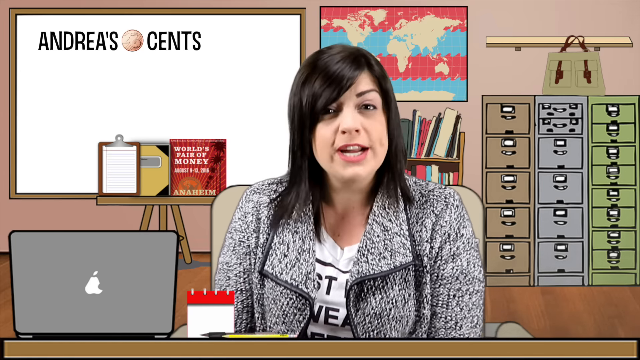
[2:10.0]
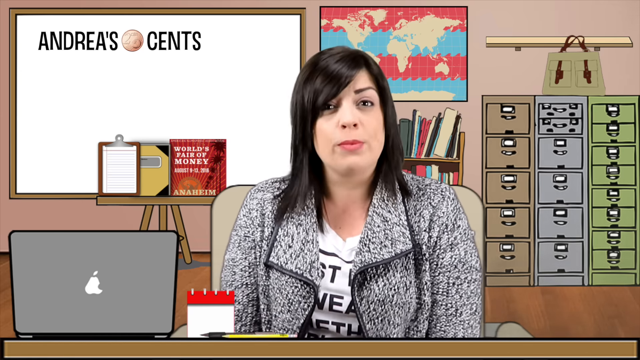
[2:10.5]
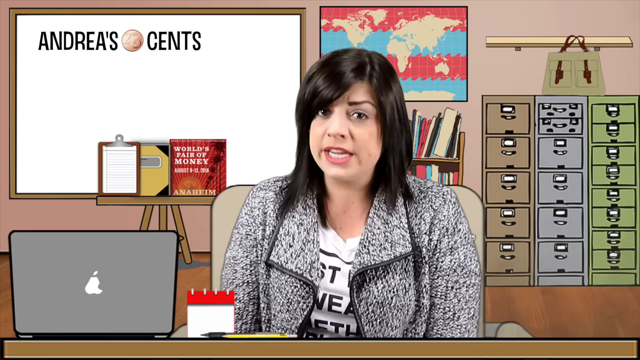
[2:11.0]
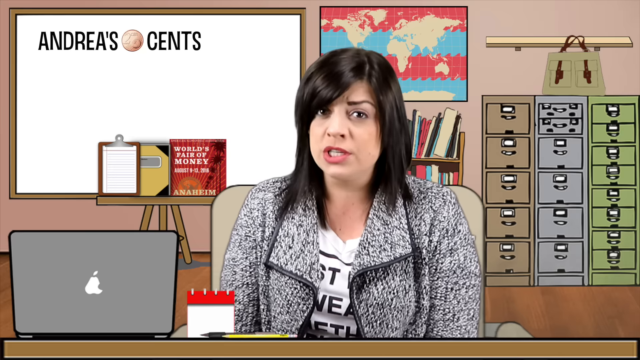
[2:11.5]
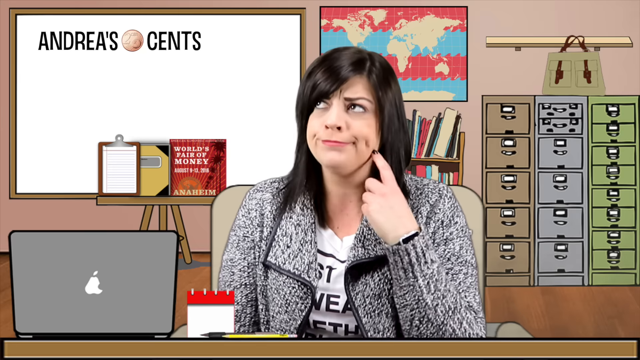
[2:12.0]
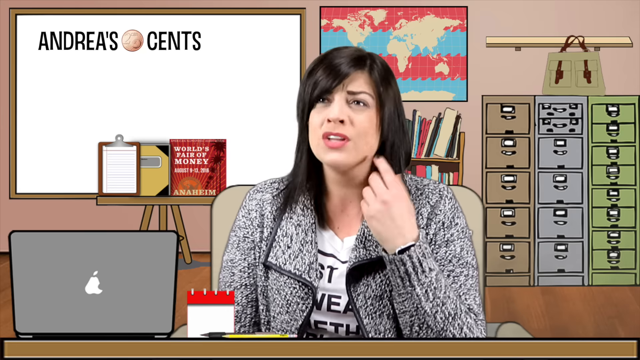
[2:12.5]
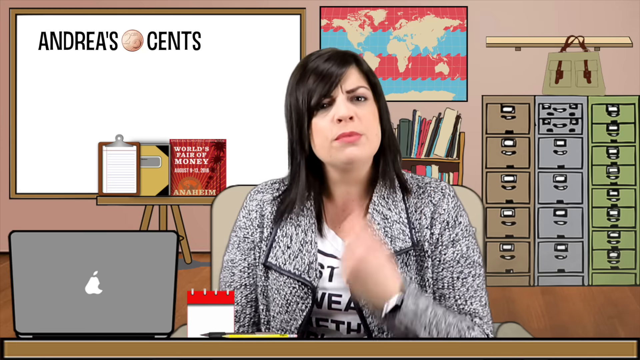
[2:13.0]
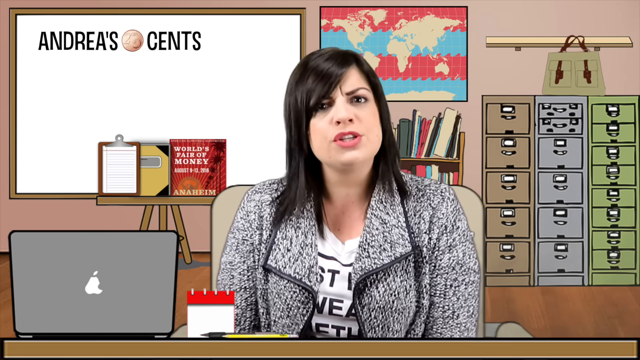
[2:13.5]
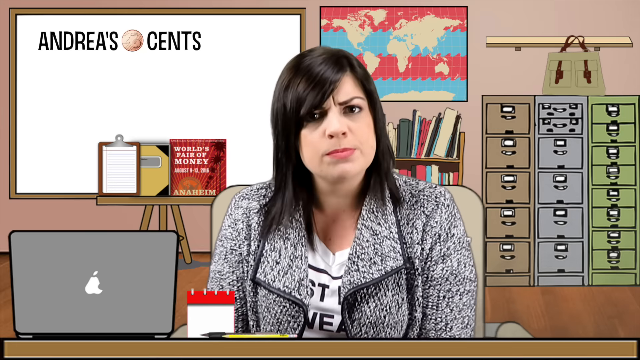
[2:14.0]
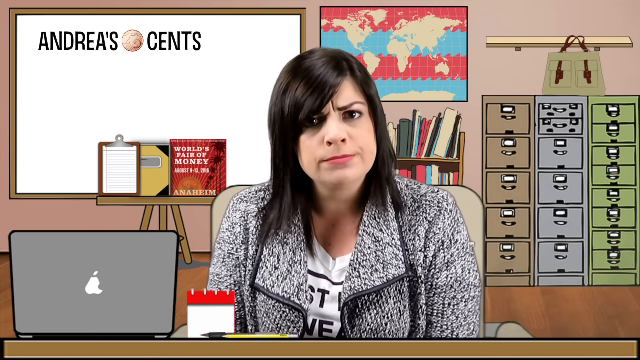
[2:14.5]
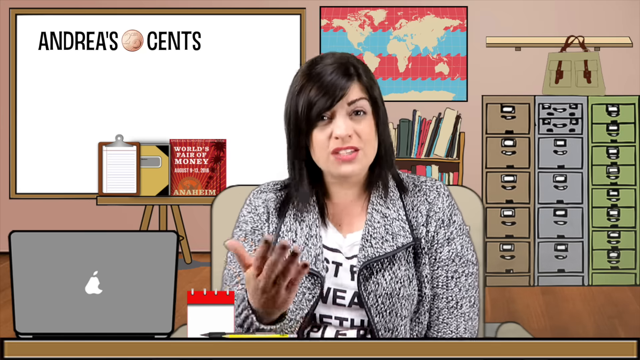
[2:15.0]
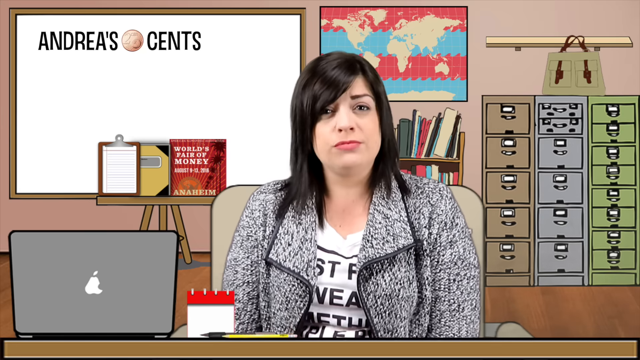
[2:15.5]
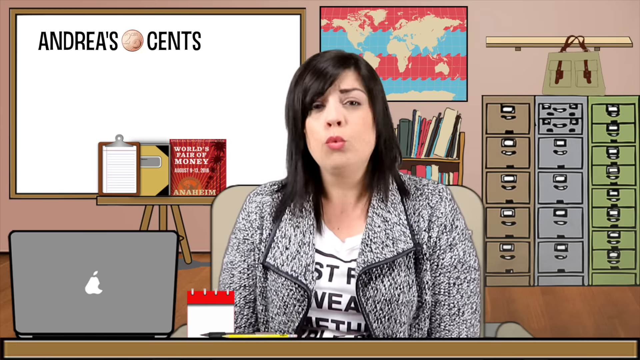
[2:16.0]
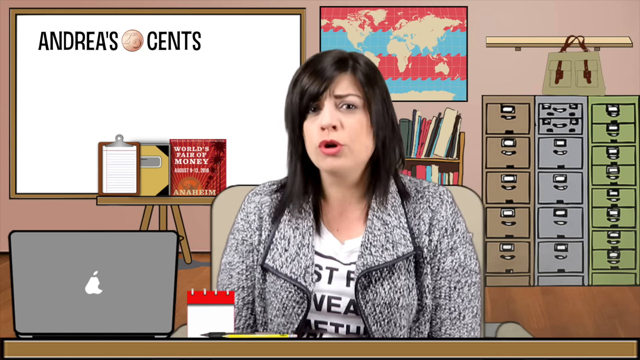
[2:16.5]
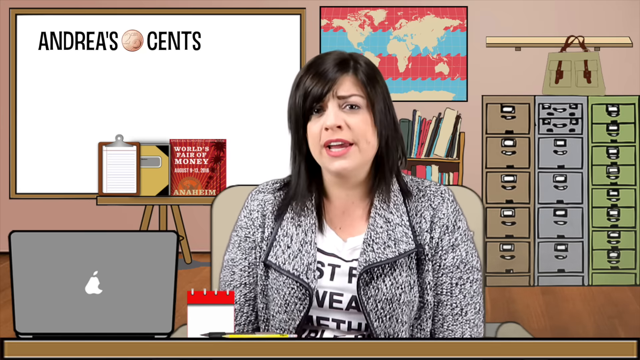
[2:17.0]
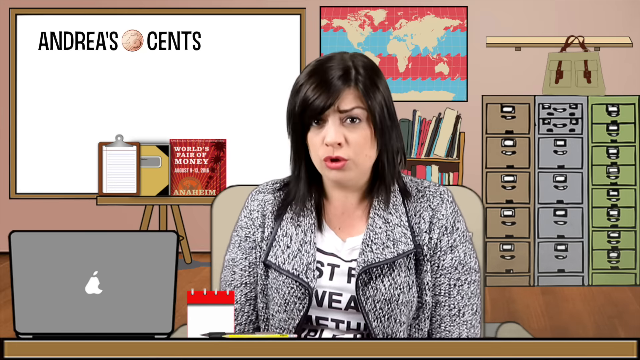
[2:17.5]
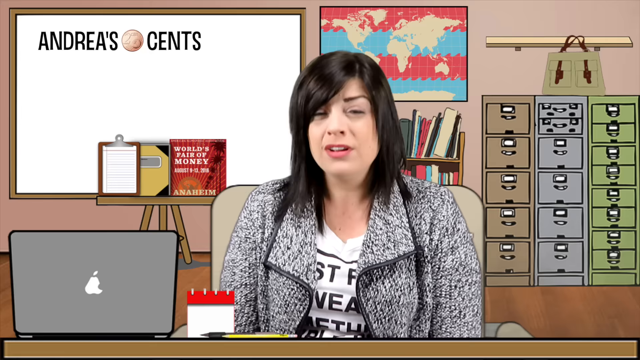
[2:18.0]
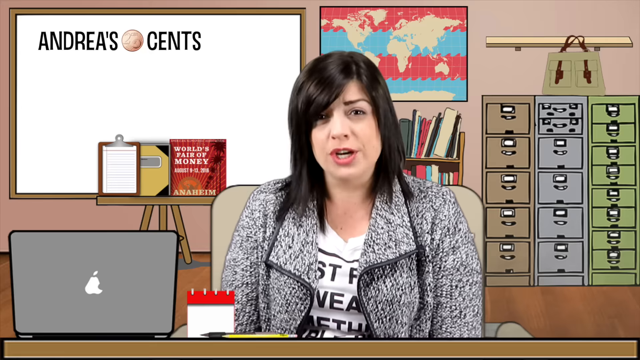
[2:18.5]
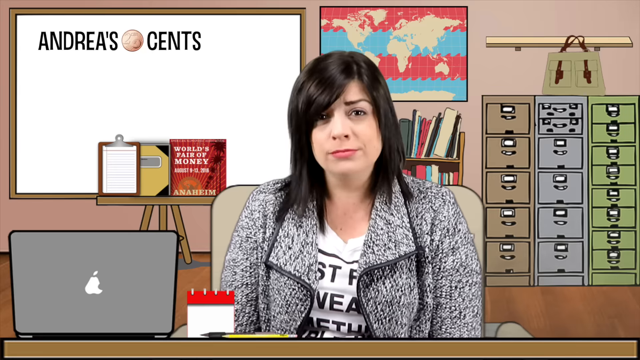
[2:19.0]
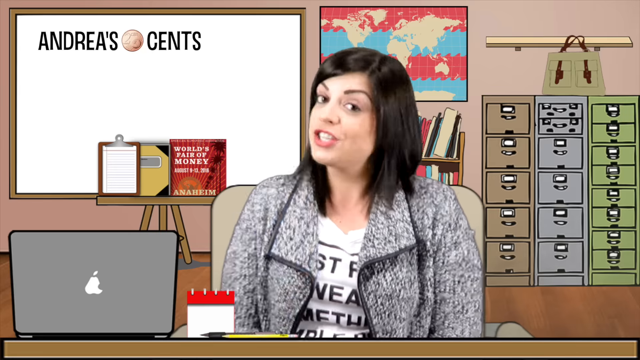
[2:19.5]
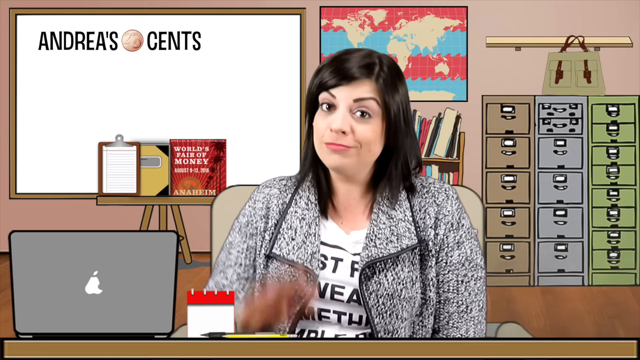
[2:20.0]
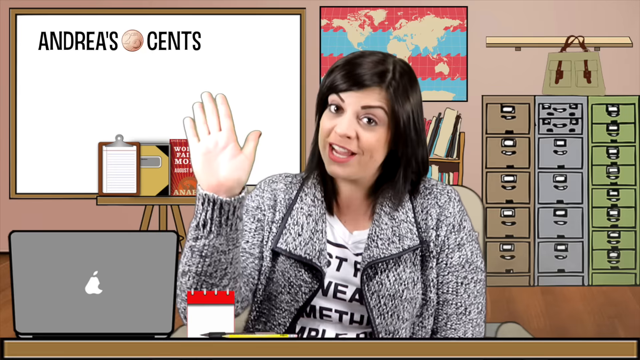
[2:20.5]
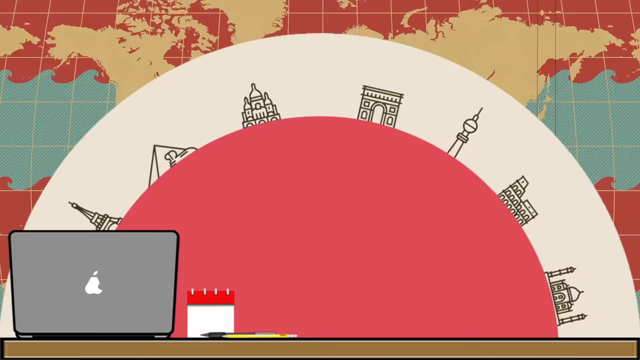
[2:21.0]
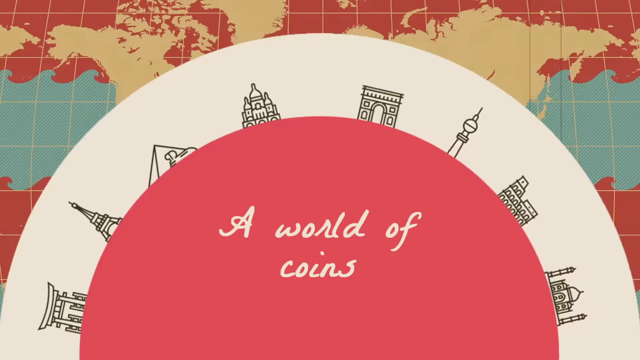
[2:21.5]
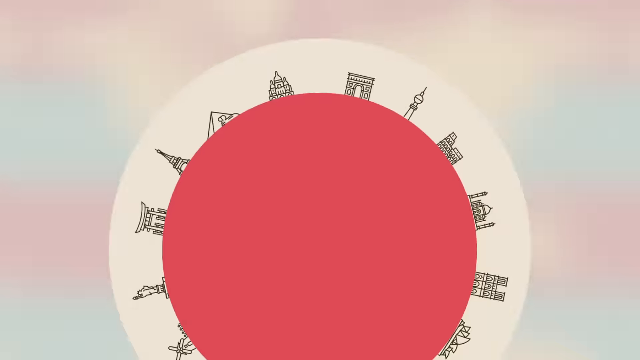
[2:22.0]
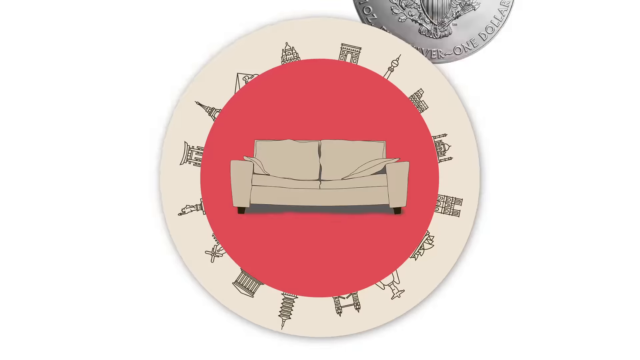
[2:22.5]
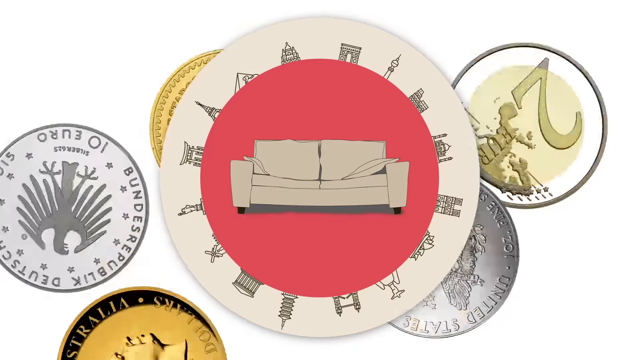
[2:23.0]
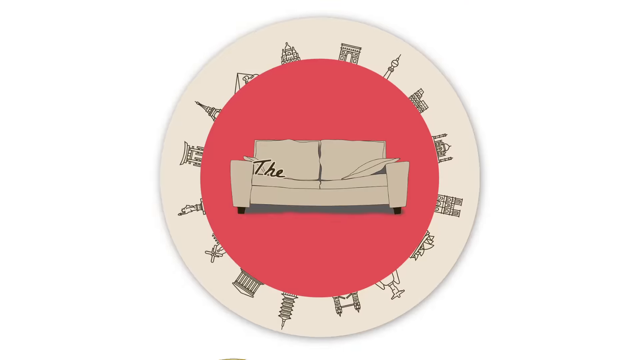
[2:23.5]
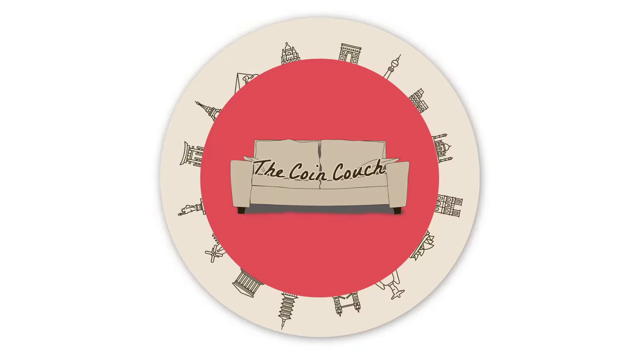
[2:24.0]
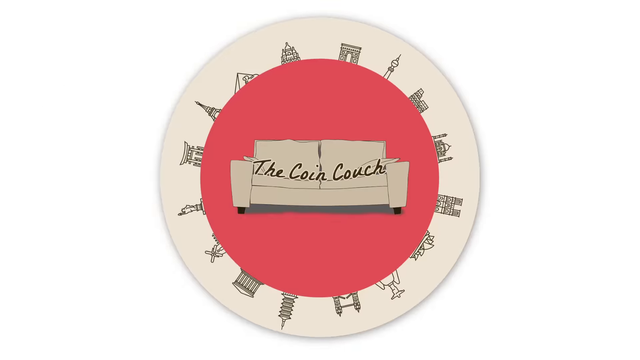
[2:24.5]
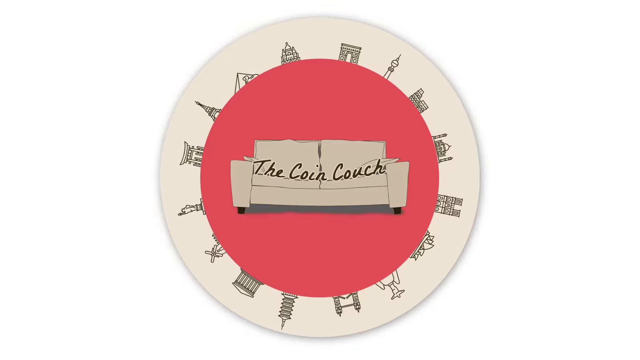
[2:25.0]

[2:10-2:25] The woman is still talking to the viewer and gesturing with her hands. She has dimples on both cheeks and black hair. She raises her left hand and waves goodbye. The scene leaves Andrea's animated background for the outro, the circle shown at the beginning: a red-shaded circle with a white couch and "the coin couch" written. Outside the red circle is another small white outline, and buildings from different cultures and places are drawn around the red circle to form a circular design. A glimpse of coins falling in the background is shown. The background of the whole image is white. The video ends with the icon for the coin couch.